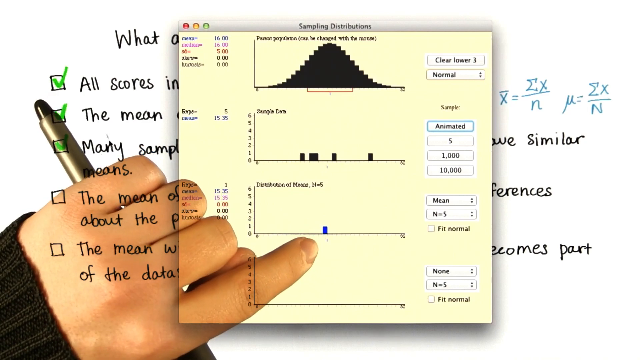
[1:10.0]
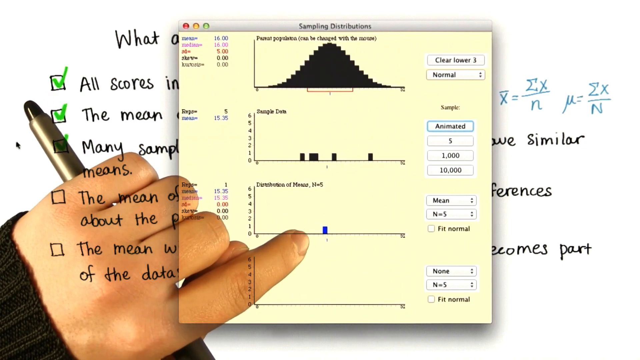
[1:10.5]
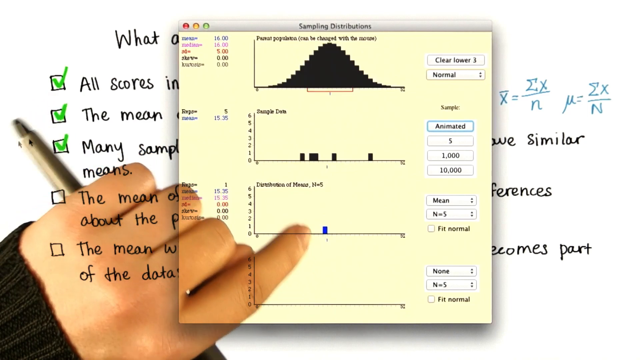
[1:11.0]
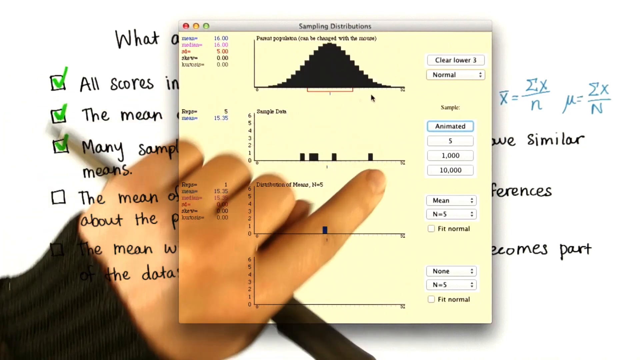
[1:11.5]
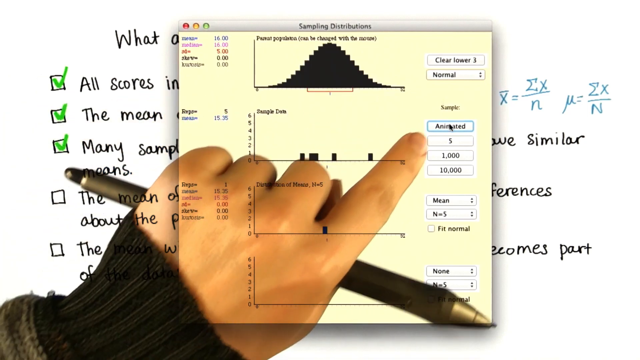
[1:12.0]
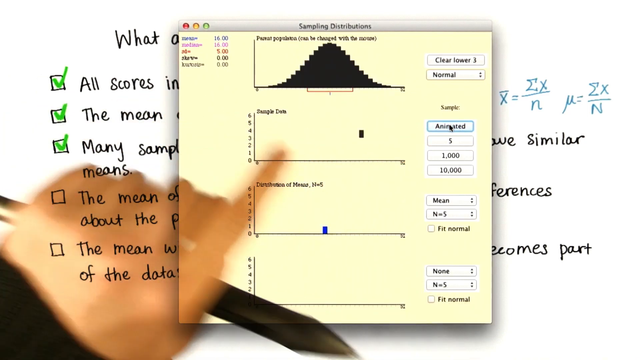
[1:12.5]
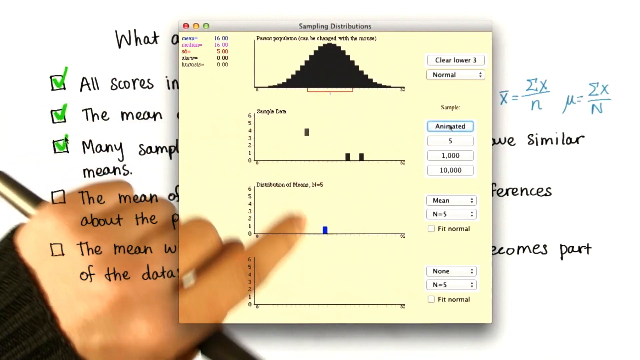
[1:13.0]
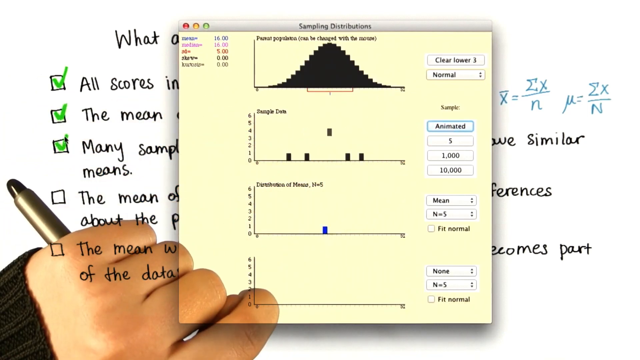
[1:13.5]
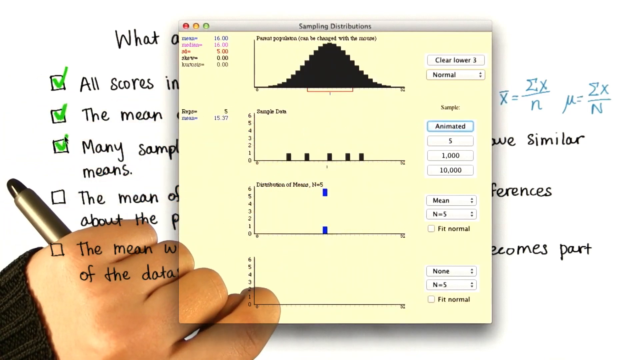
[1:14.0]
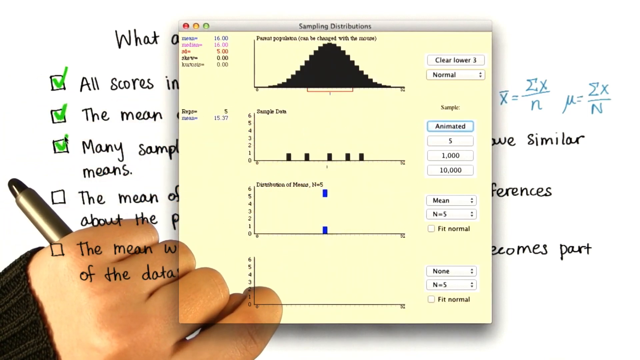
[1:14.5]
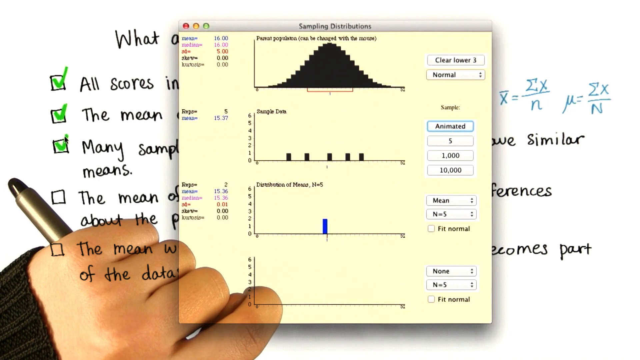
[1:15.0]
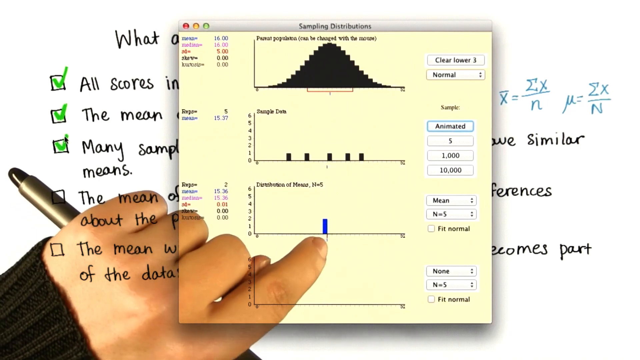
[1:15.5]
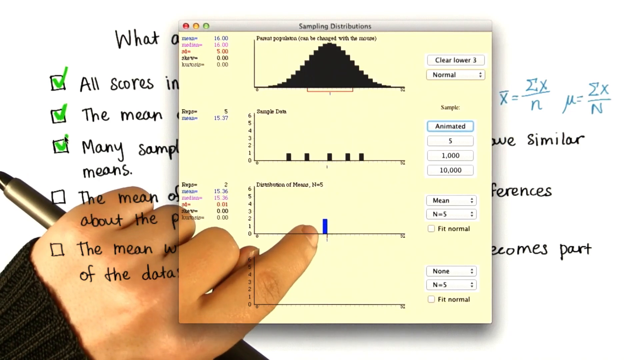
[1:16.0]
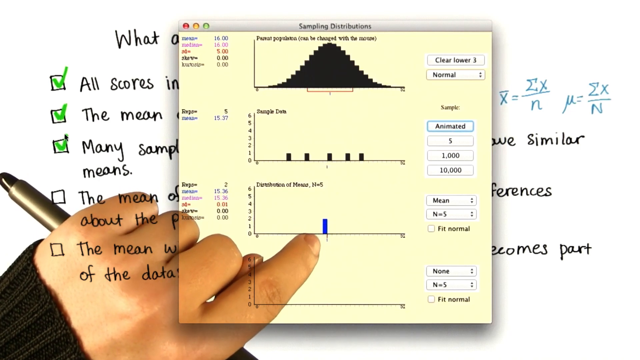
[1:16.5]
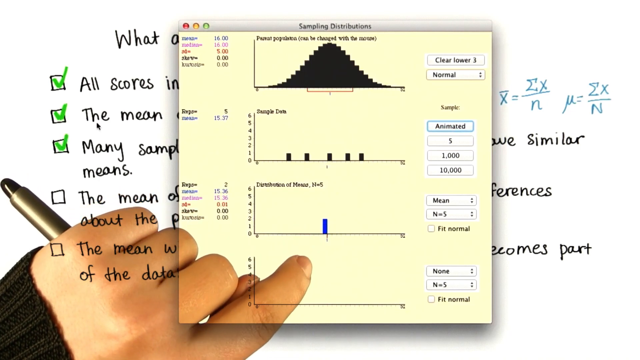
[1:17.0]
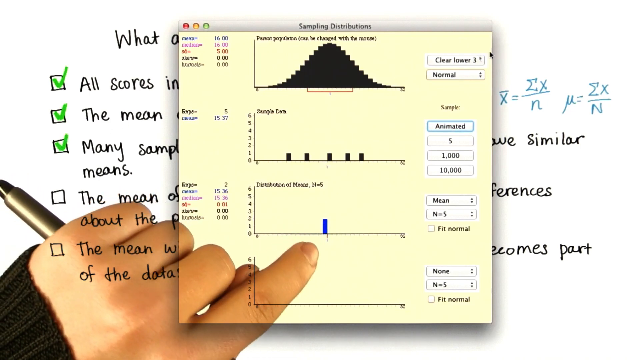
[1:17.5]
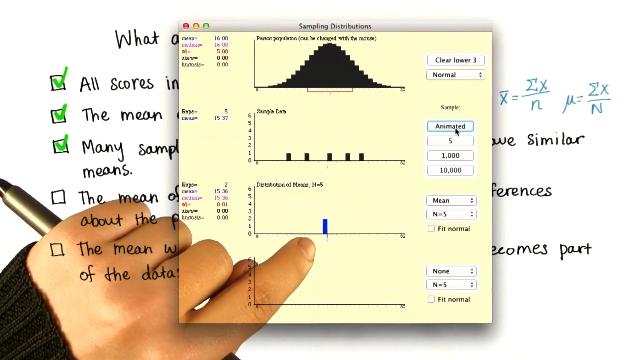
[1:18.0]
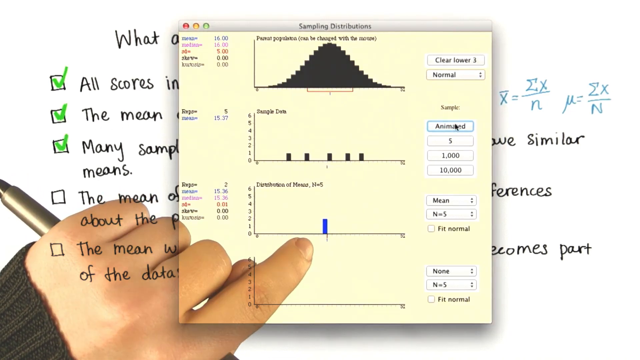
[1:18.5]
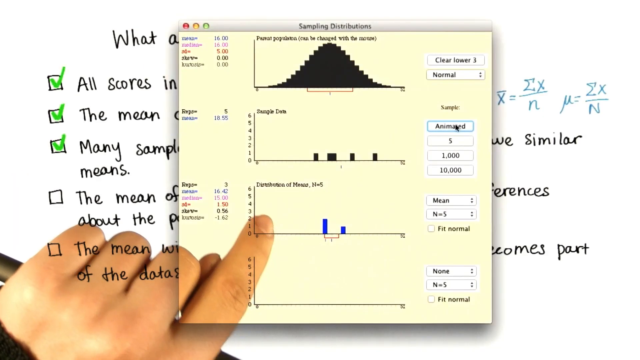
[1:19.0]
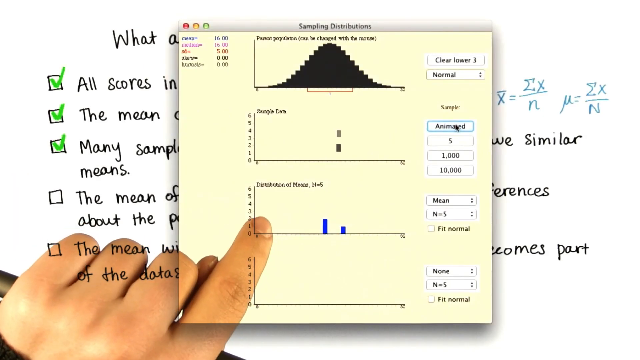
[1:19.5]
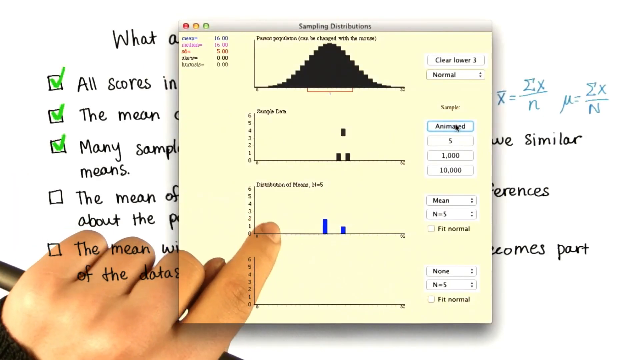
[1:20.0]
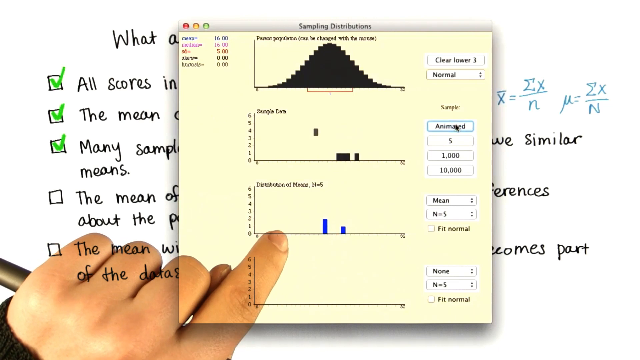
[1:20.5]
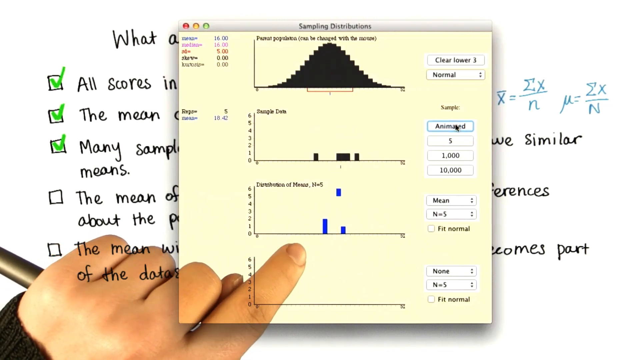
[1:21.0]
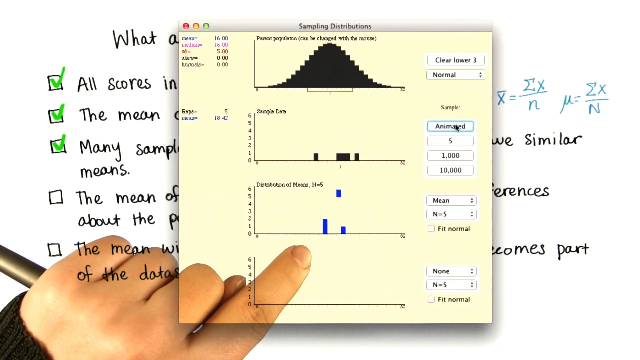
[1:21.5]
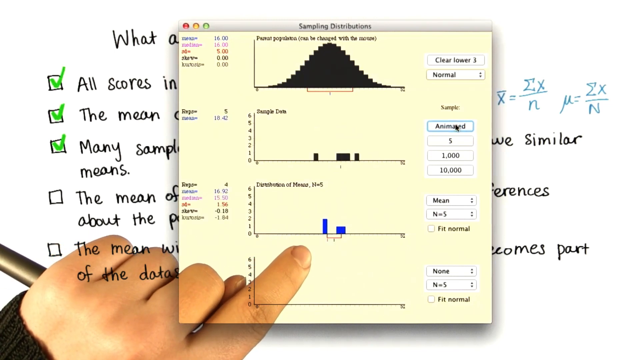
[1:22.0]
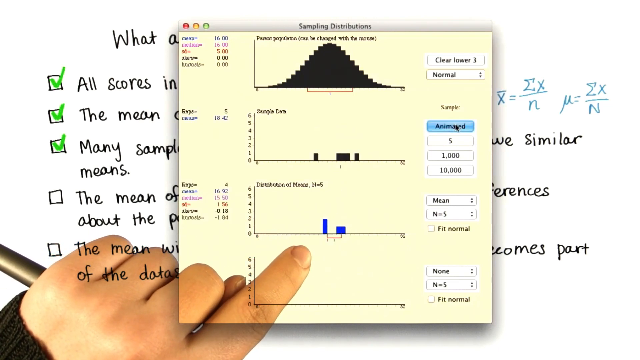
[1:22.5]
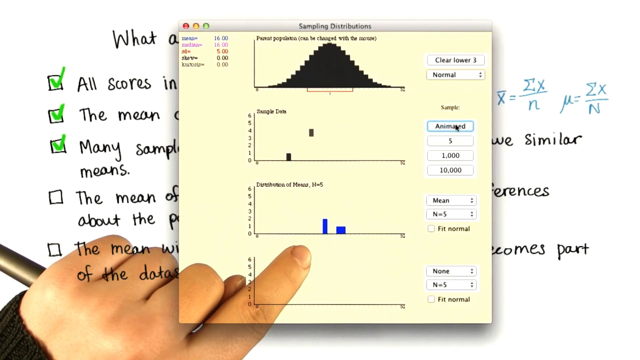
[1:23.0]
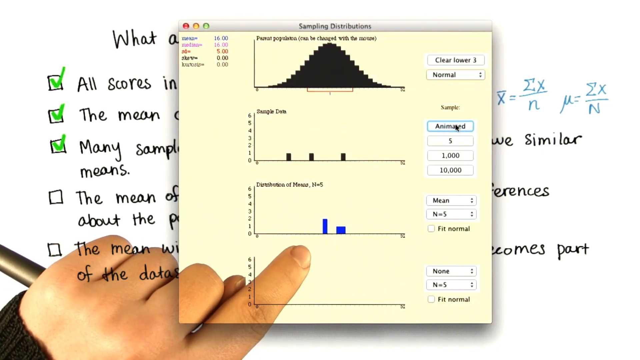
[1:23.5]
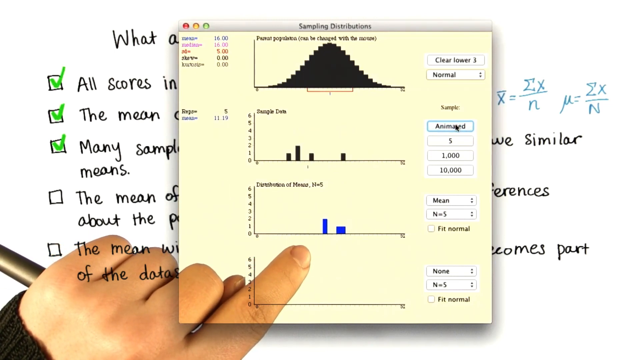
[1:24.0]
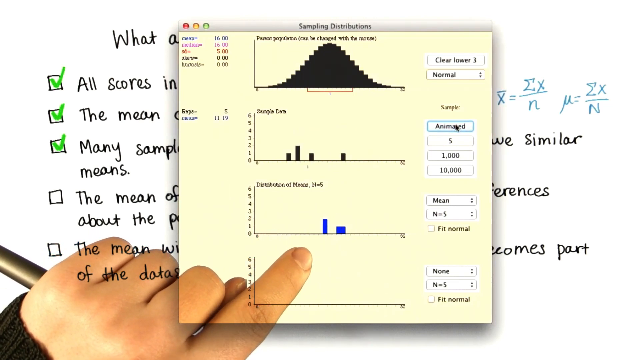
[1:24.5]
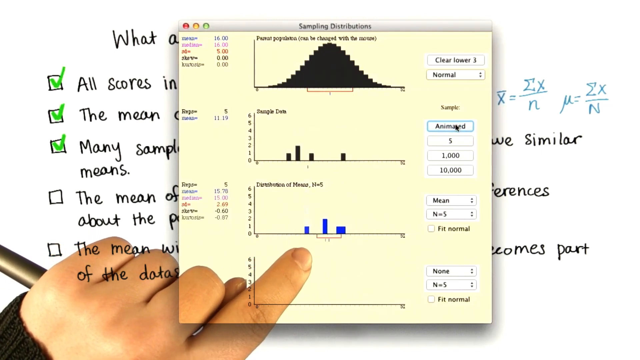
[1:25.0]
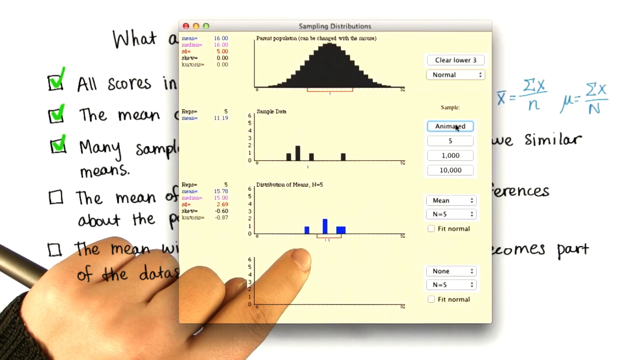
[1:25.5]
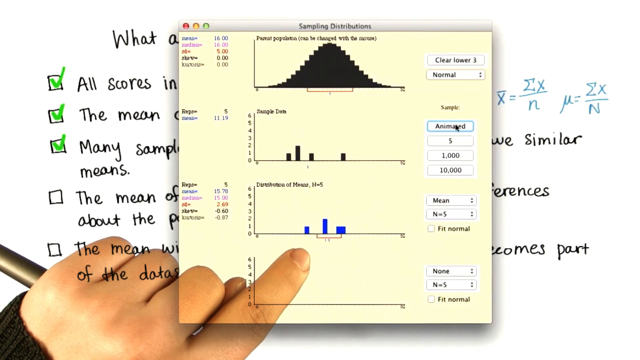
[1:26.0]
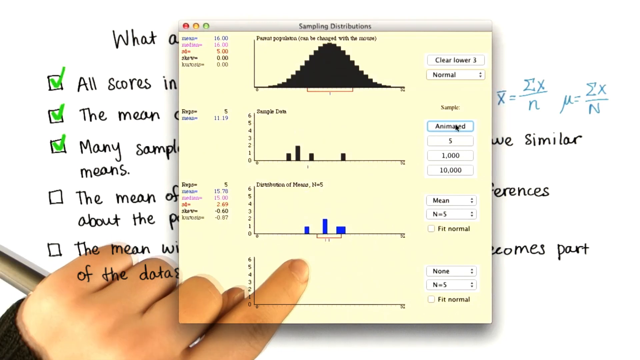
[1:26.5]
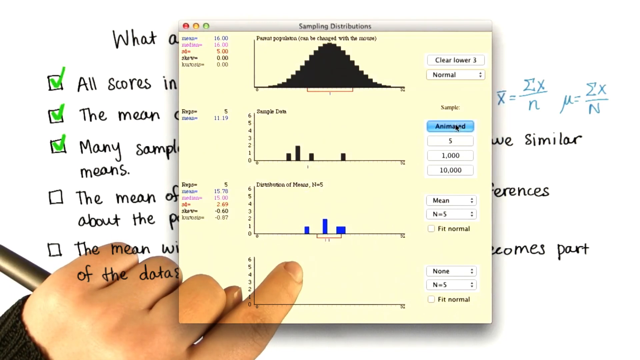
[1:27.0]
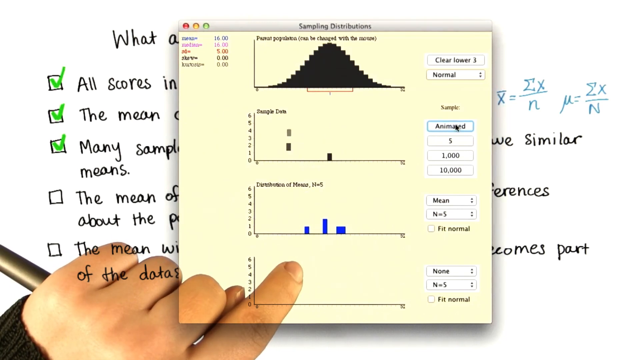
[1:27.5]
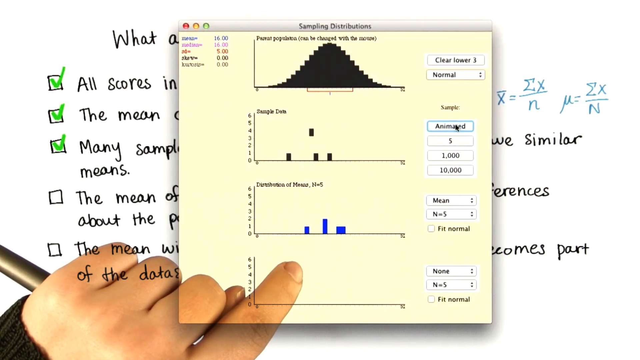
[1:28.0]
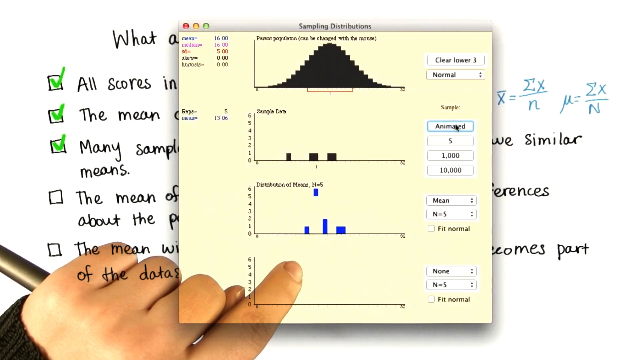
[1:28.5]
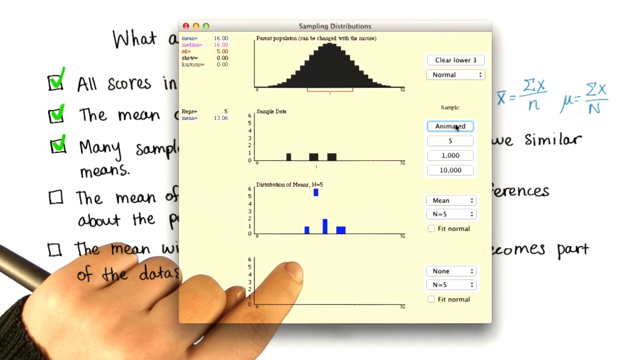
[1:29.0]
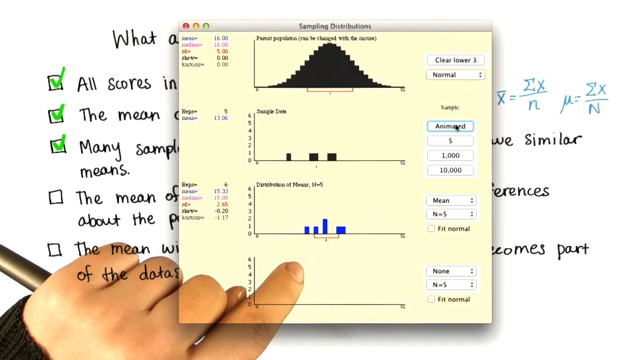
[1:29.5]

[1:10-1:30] A person holding a pen in his left hand looks at a big diagram showing four different graphs under the main title "Sampling Distribution". The first graph shows a slope, while the second and third have little black bars along the x-axis. He clicks the animate button, and points start distributing along the second and third graphs. He continues to move his left hand and clicks animate again, adding even more bars to the second and third graphs. He clicks again, and the bars move on the second graph but not on the third. He clicks yet again, and the bars redistribute their positions on both the second and third graphs. Two of the graphs have their charts in black, while the first graph is bright blue.